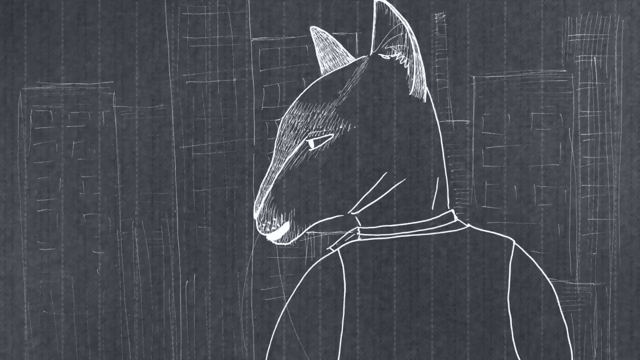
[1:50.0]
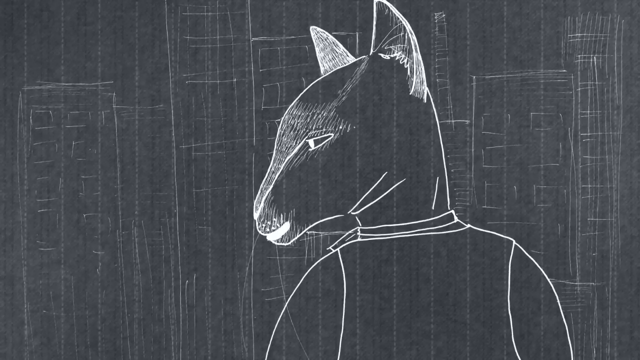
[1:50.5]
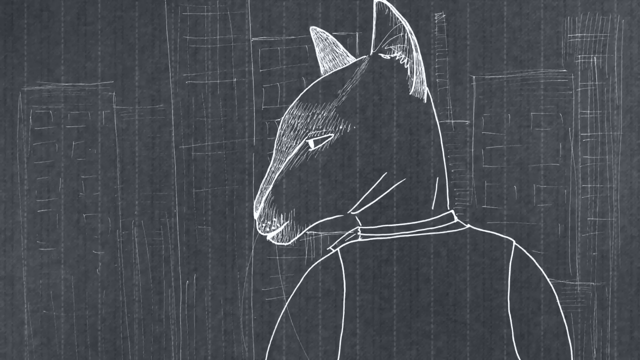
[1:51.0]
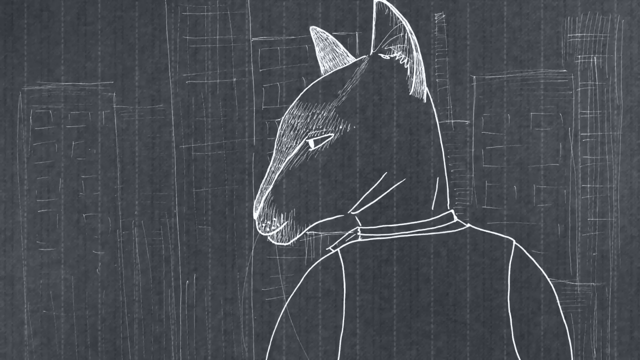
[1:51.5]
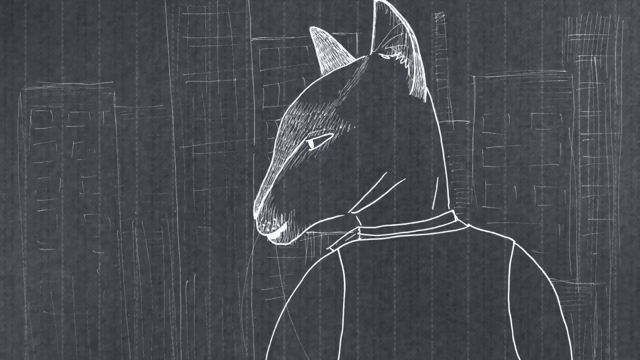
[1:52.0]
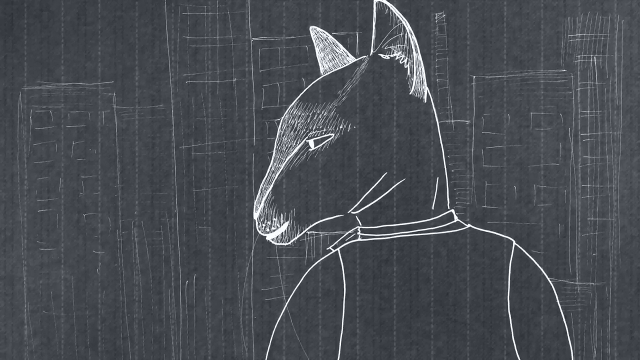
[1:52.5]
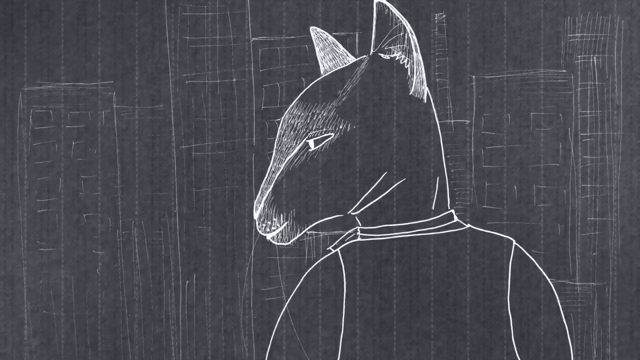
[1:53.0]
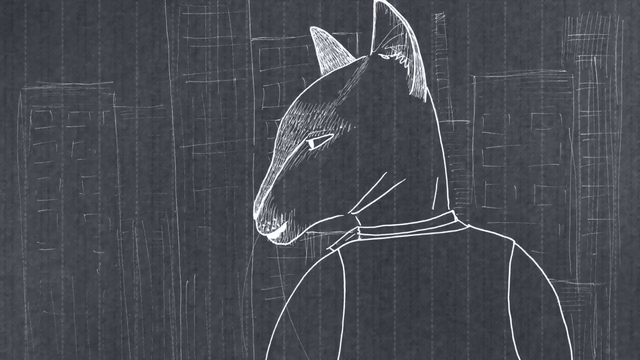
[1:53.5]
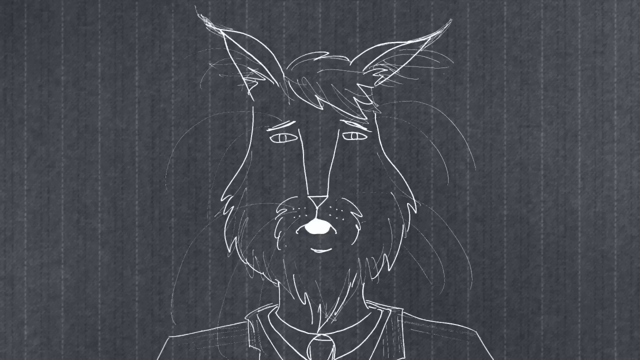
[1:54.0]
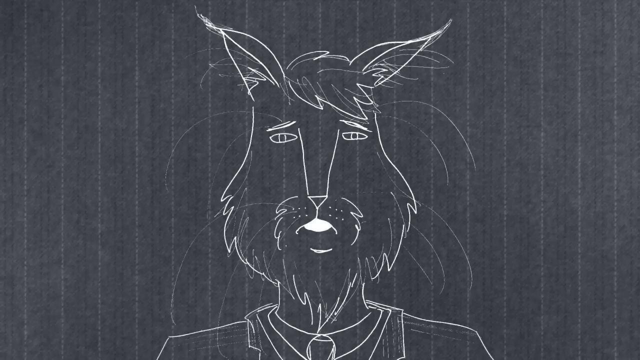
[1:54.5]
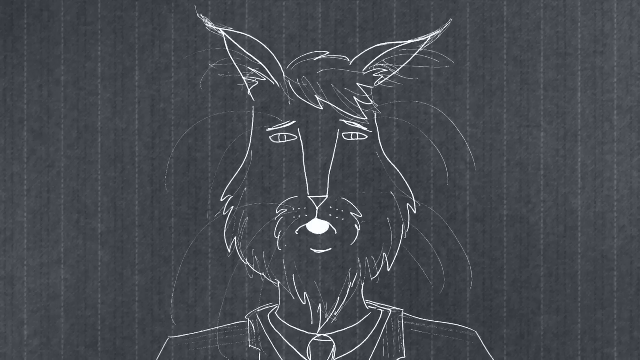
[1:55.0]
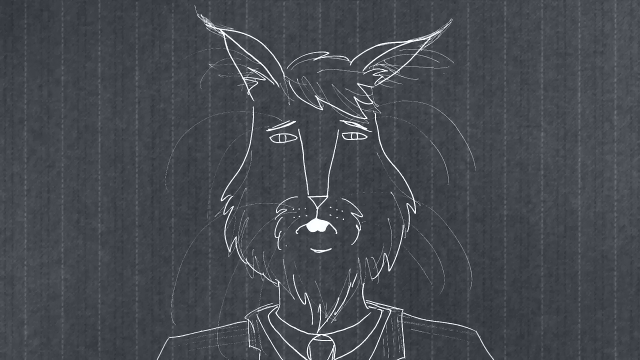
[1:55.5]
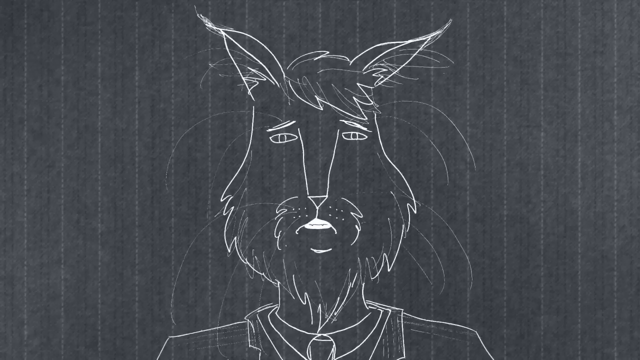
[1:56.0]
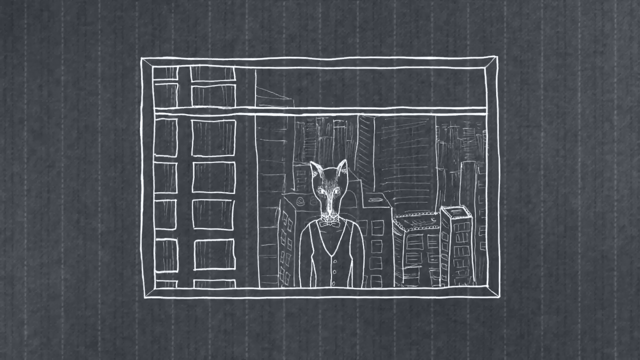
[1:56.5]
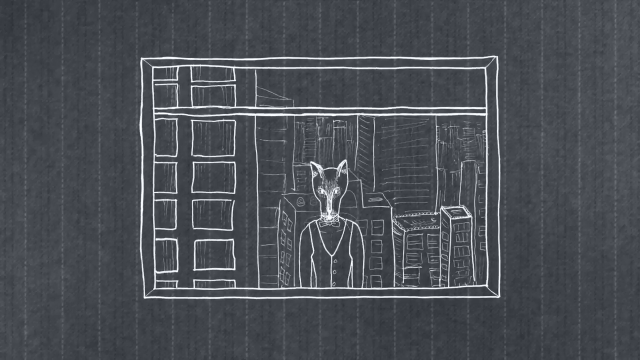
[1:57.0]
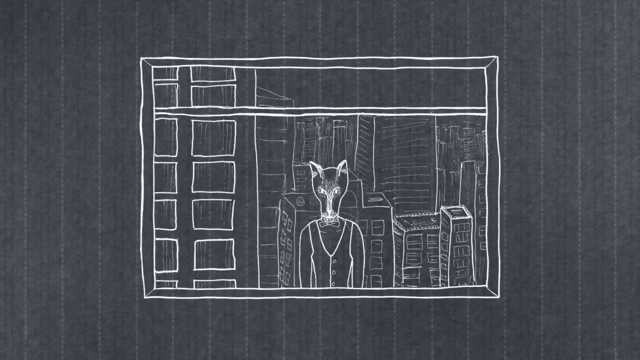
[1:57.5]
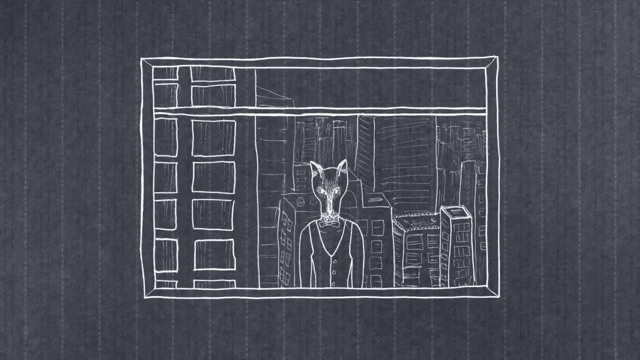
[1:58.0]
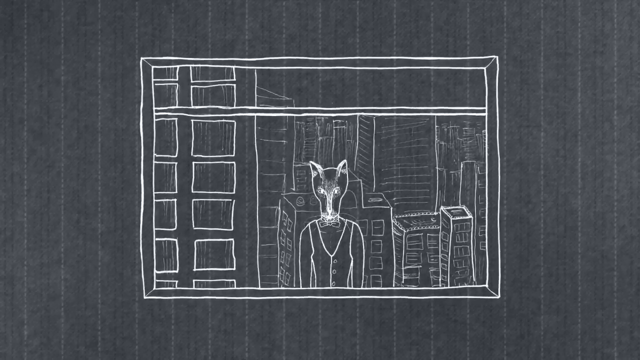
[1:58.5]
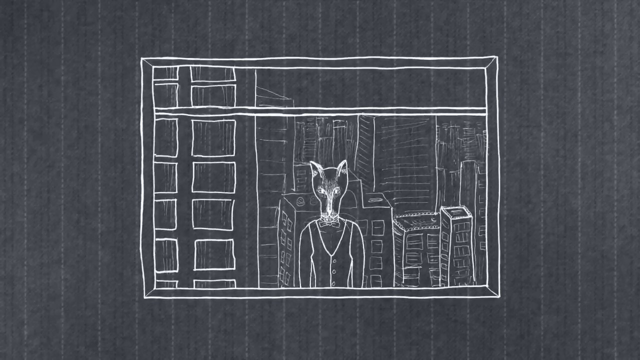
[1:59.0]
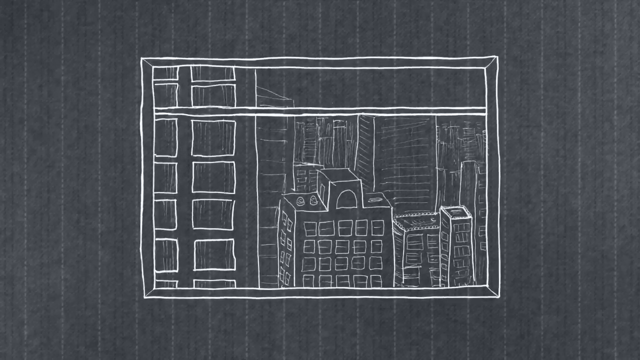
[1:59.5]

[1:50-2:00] Anthropomorphic cat characters are drawn in white lines against a gray background with a texture and faint pattern that look almost like fabric. Two cats wear human clothes. One stands in front of a window, looking over his shoulder and speaking to another cat. A close-up shows the other cat's face: he has very long ears and a fluffy face with a little tuft of fur between his ears, and only his mouth moves as he speaks. The scene then shows the thin, long-faced cat standing in front of a window; he speaks and then drops out of the frame.